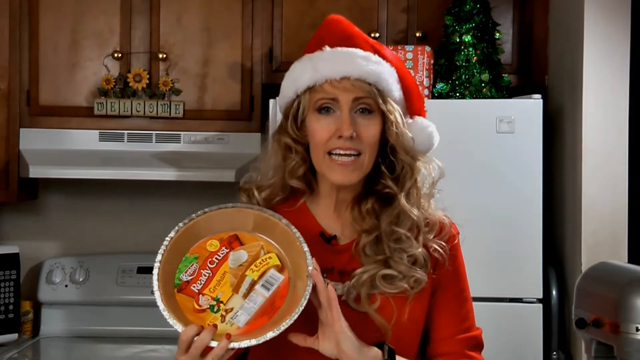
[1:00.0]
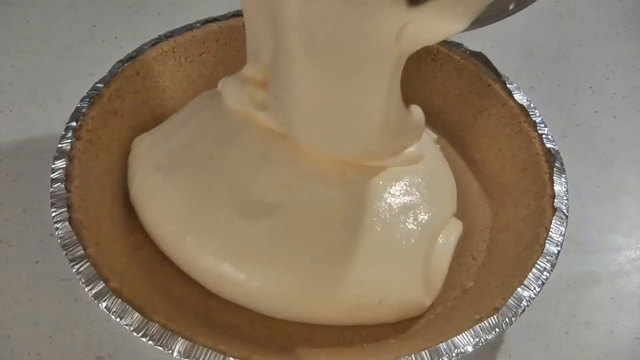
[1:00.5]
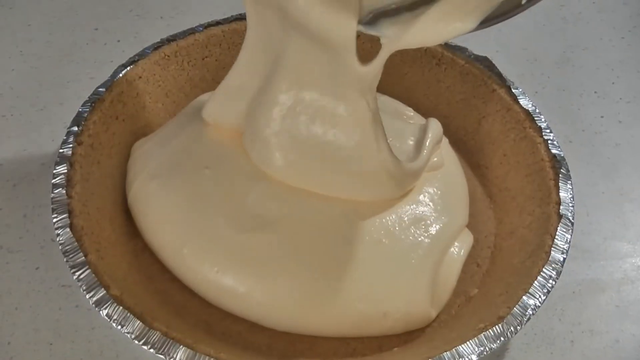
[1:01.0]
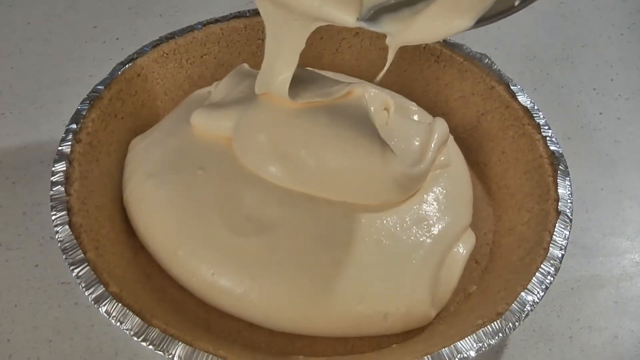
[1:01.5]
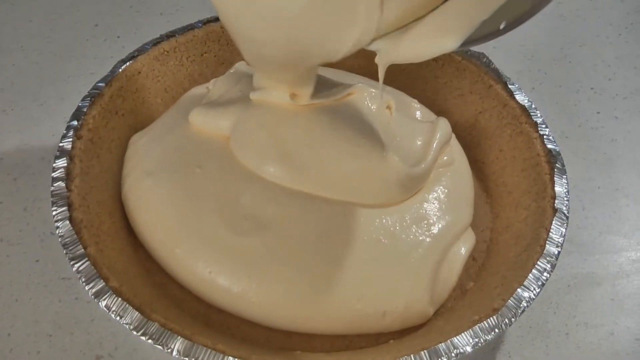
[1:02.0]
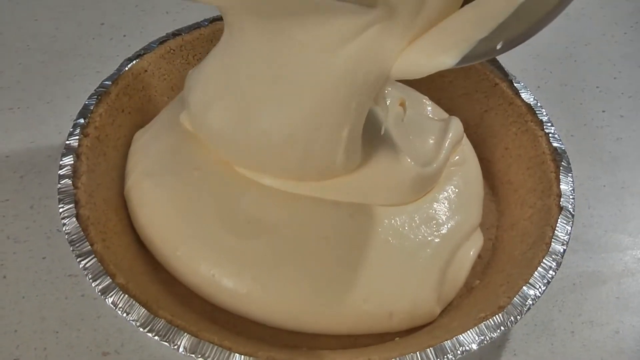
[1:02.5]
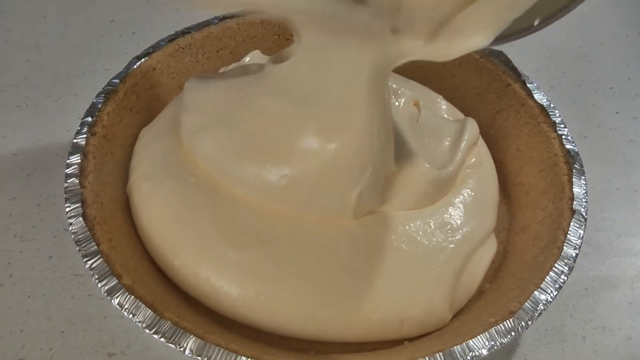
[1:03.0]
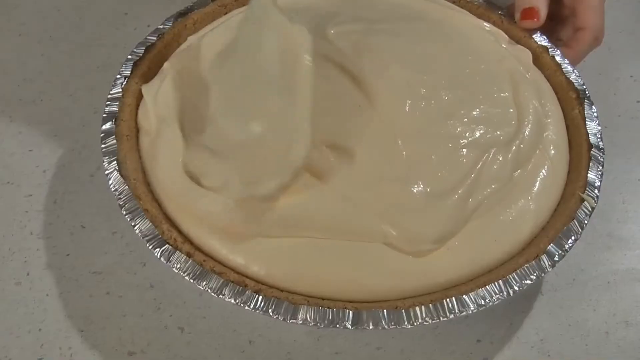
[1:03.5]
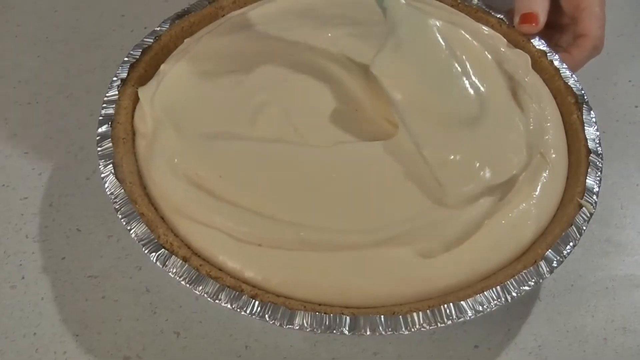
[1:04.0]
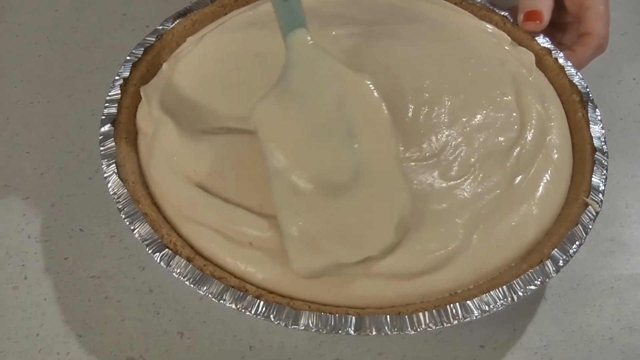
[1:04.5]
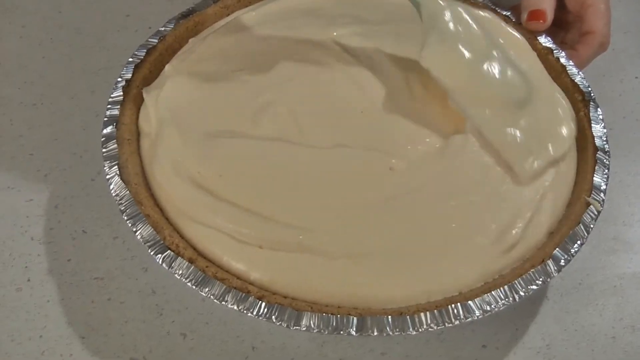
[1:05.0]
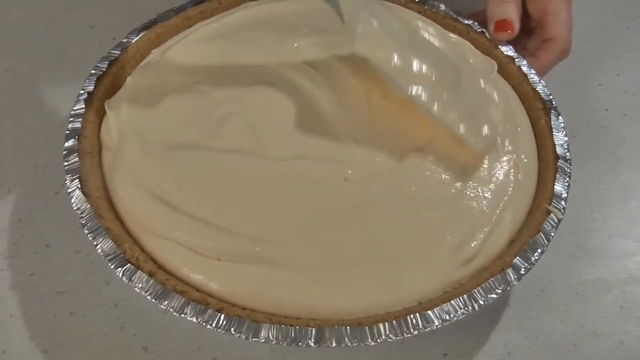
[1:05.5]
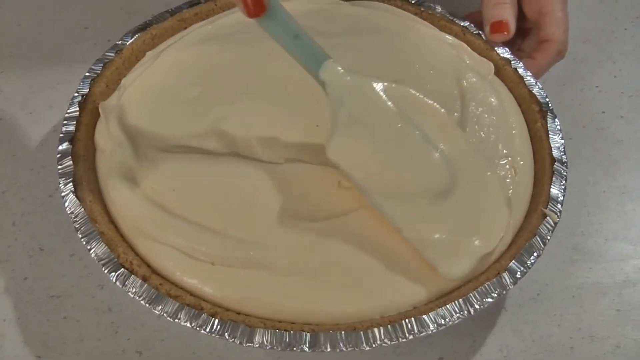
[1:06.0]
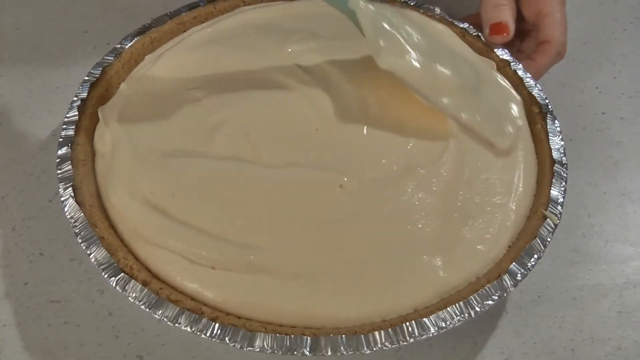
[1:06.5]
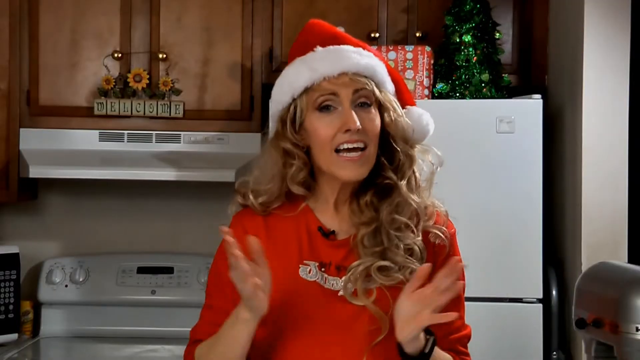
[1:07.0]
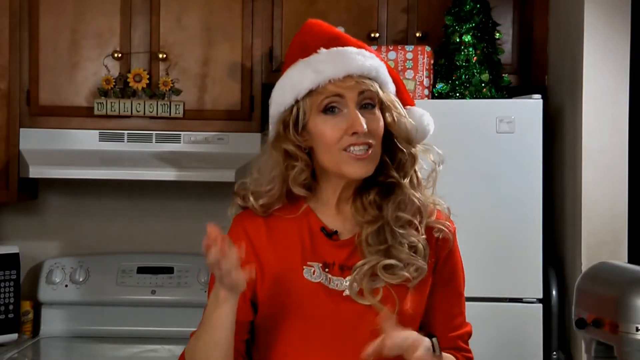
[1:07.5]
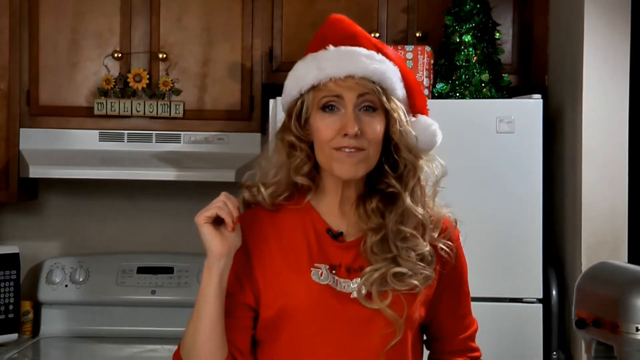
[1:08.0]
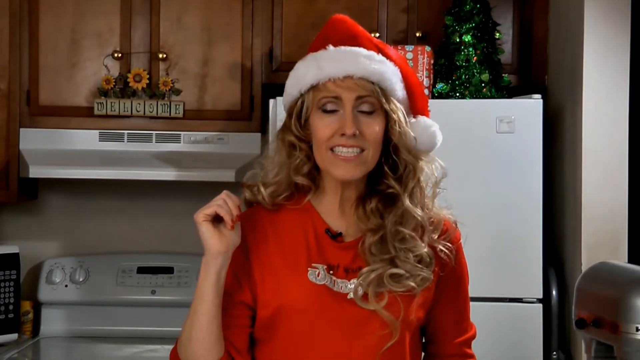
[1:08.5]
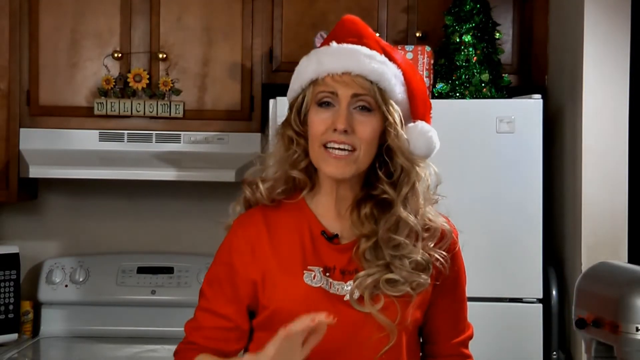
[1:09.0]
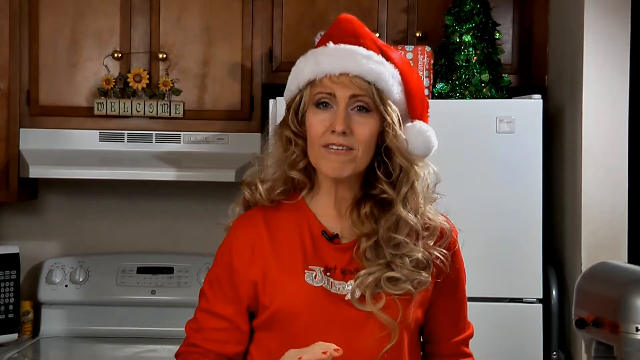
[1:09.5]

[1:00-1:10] The mixing appears to be finished. The woman has a bowl with a crust already prepared; she opens it and pours the mixture into the crust. With a small tool she layers and spreads the mixture so it is even in the bowl. The video then cuts to her speaking again.